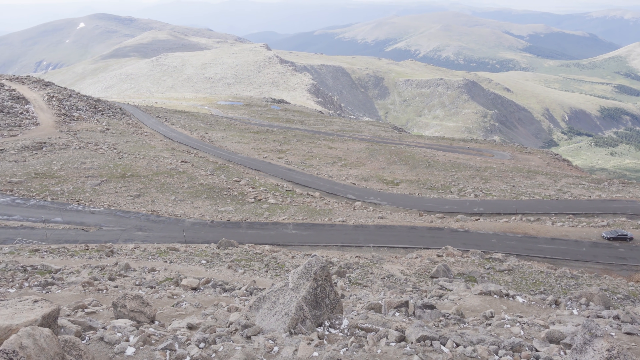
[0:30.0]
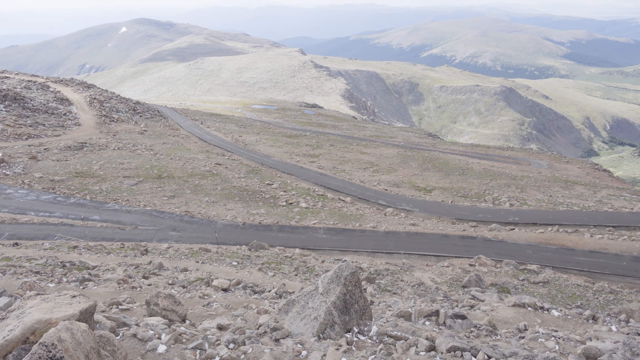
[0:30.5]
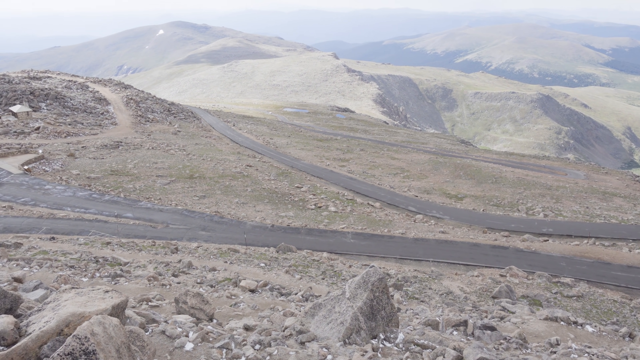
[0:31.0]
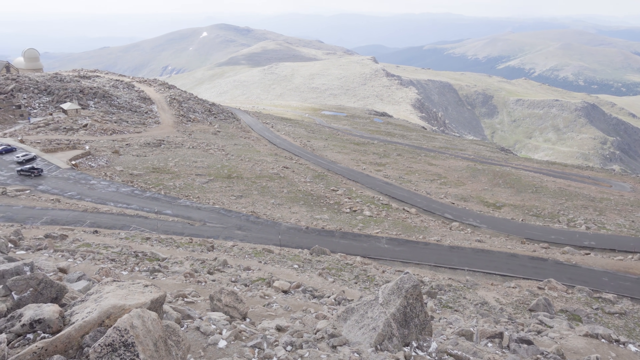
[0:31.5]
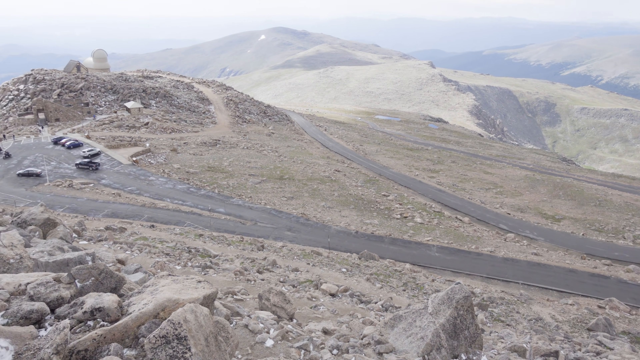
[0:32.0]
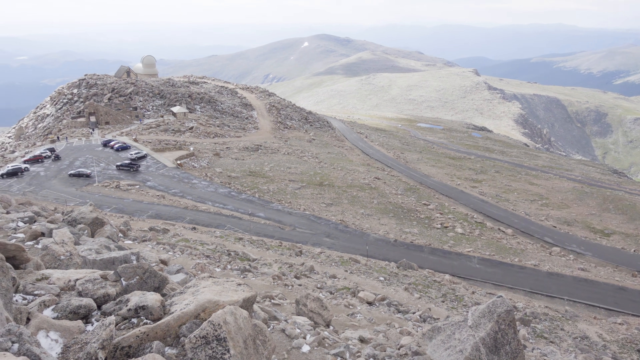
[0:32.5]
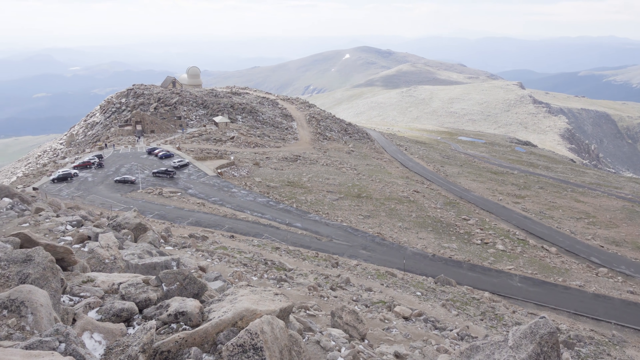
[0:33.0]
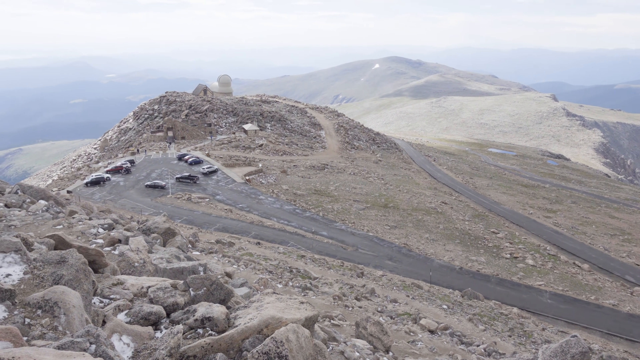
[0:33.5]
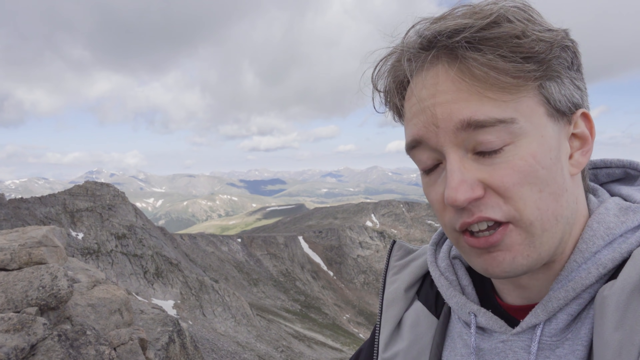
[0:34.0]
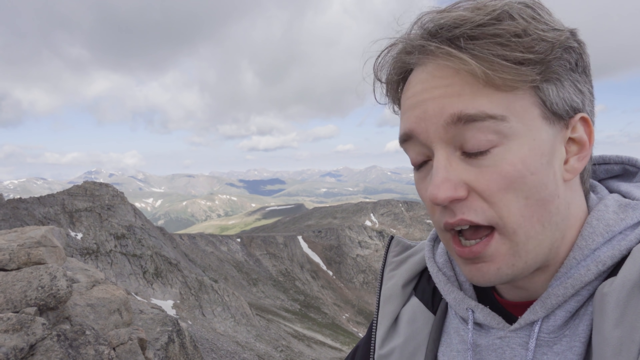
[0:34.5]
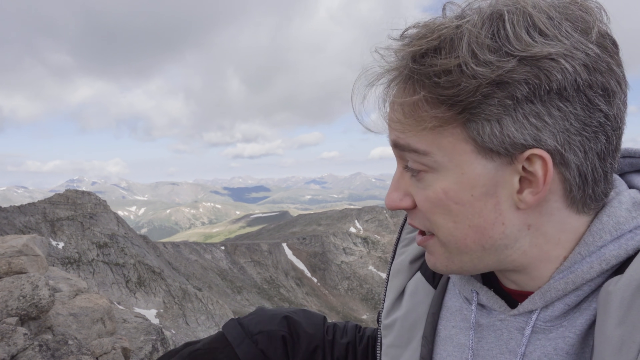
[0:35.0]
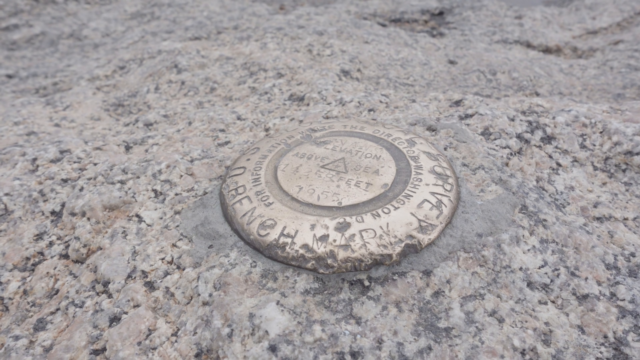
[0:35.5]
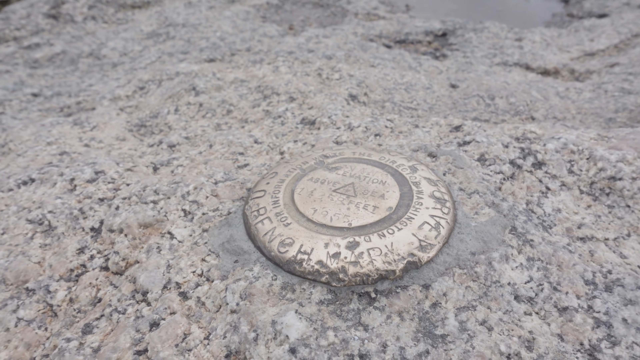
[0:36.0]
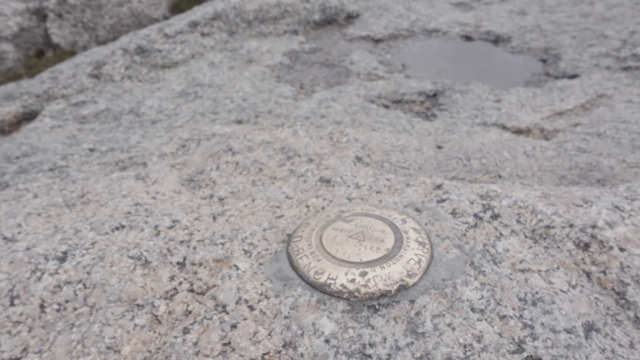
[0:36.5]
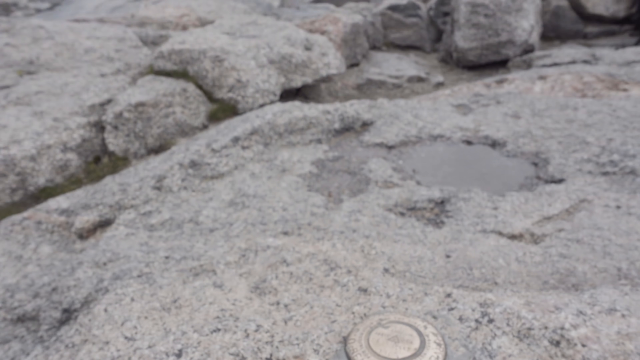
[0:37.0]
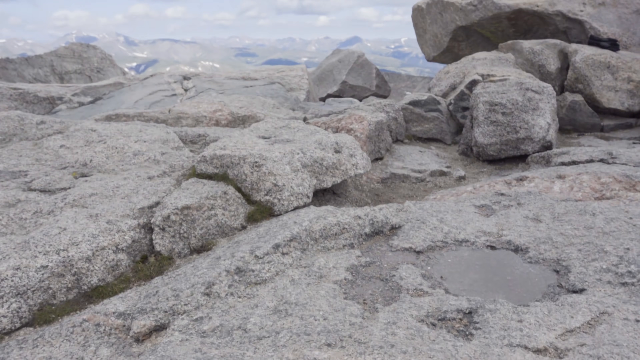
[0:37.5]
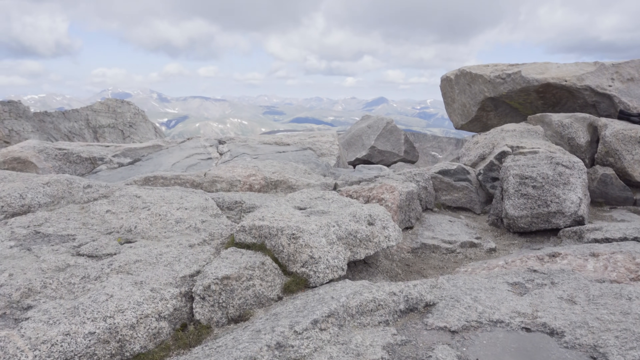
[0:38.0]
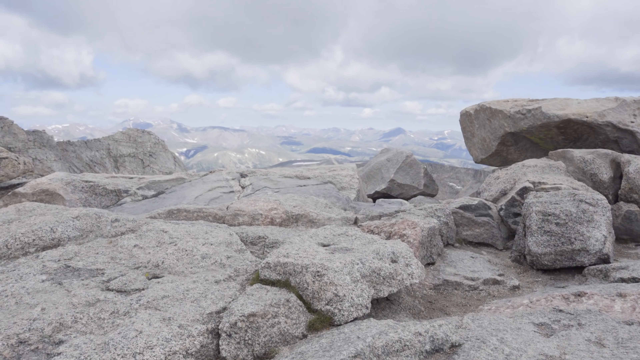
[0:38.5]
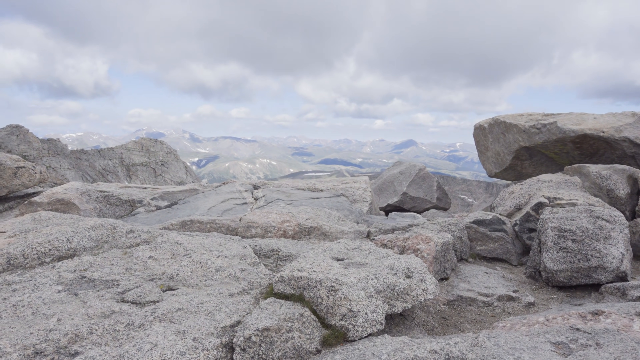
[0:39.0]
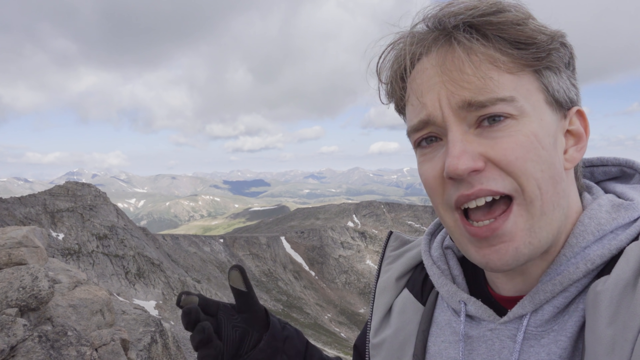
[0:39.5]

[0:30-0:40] The camera shows the view at the bottom of the mountain, panning across the road below. On the left side of the road there appear to be numerous parked cars, apparently around eight or so, and a black car is driving. The roads at the bottom of the mountain appear worn out and black. The shot cuts back to the man speaking to the camera. A zoomed-in shot shows a stone with what appears to be a metal piece set within it, bearing unreadable writing that appears to be in a foreign language. Many gray rocks are around the metal piece in the stone on the mountain.